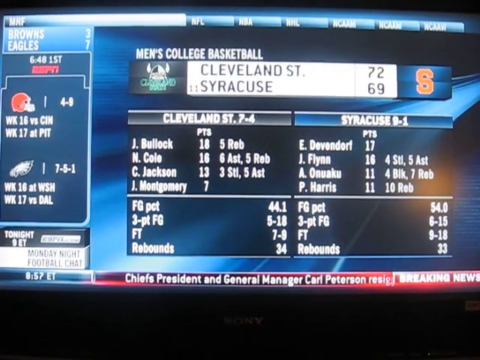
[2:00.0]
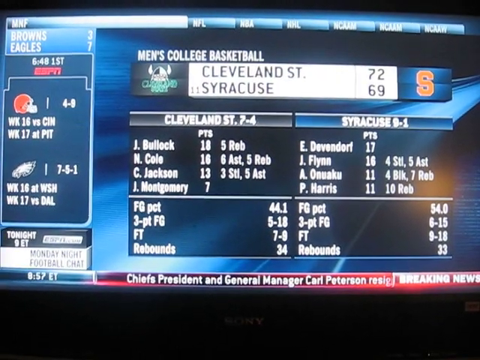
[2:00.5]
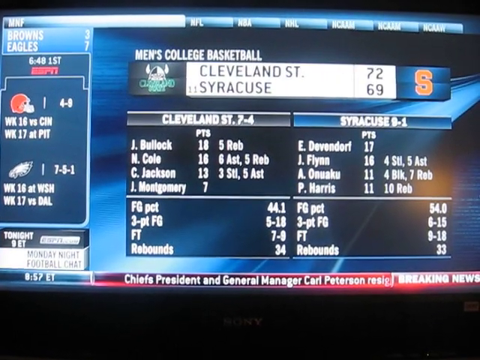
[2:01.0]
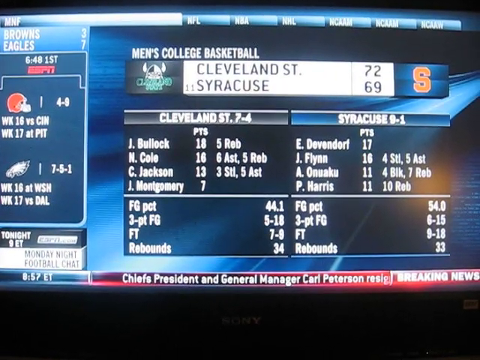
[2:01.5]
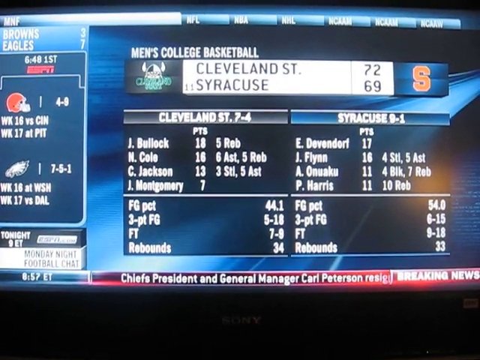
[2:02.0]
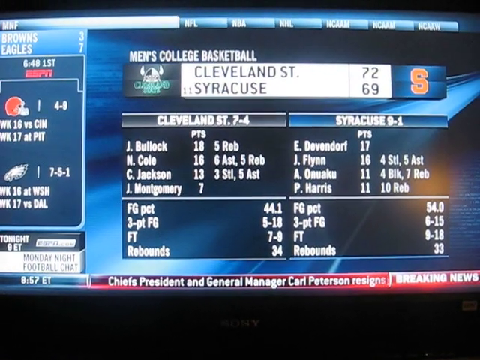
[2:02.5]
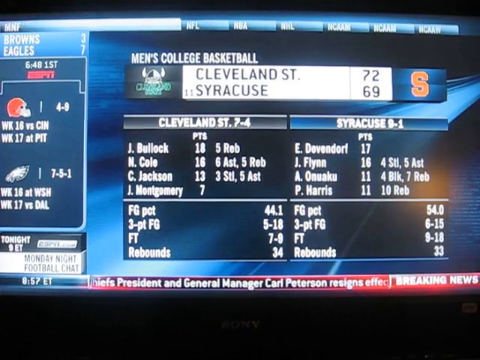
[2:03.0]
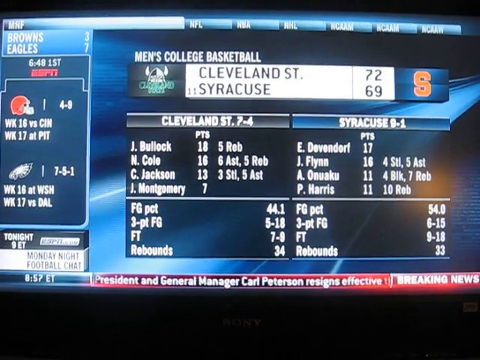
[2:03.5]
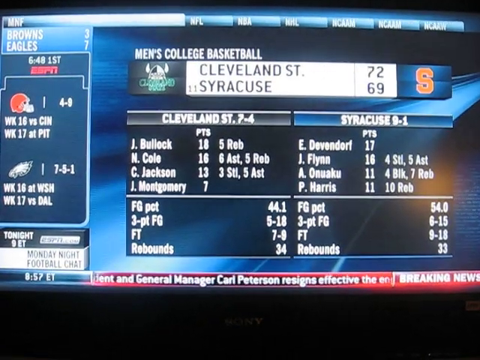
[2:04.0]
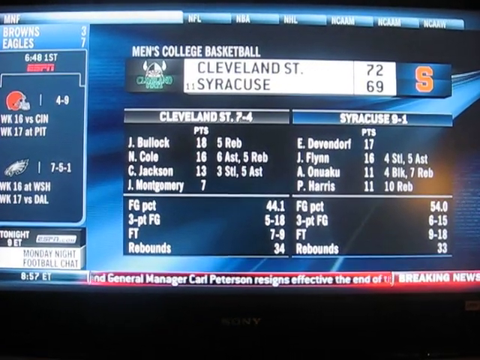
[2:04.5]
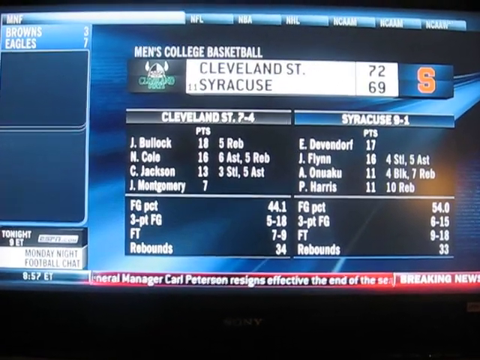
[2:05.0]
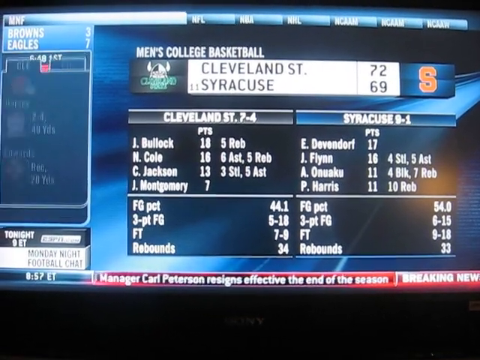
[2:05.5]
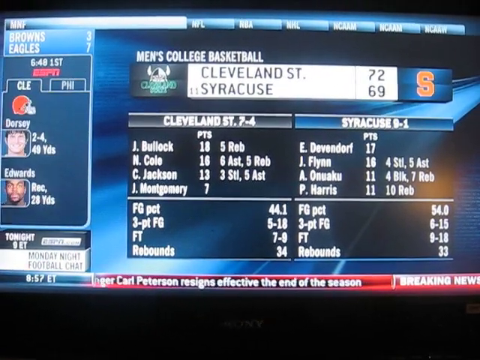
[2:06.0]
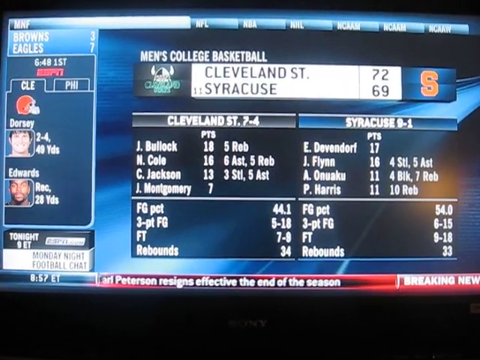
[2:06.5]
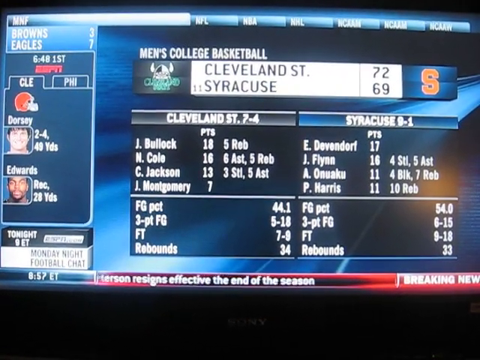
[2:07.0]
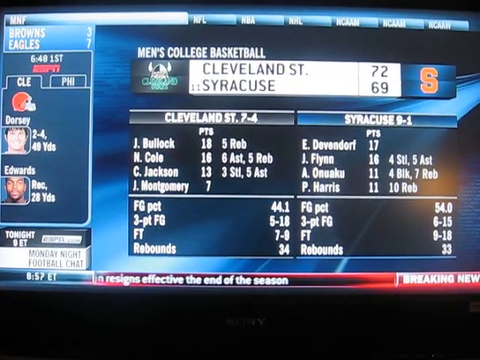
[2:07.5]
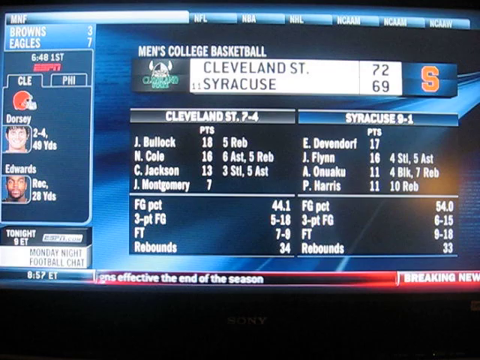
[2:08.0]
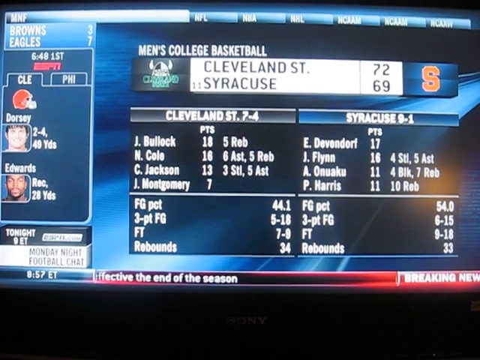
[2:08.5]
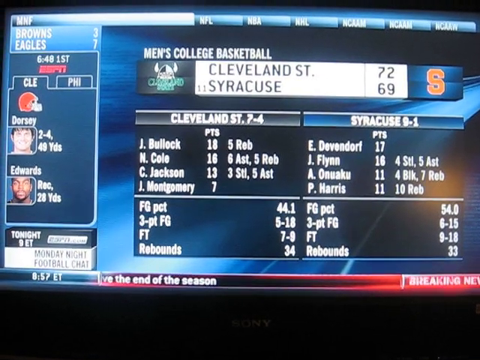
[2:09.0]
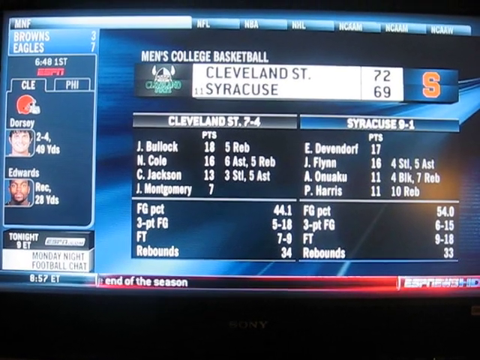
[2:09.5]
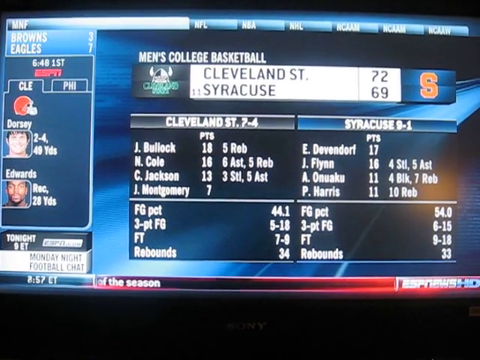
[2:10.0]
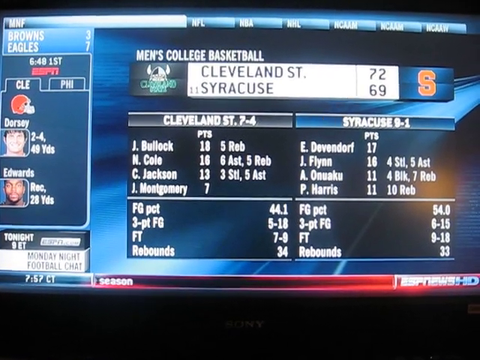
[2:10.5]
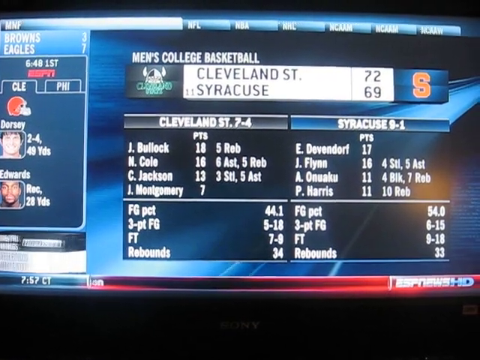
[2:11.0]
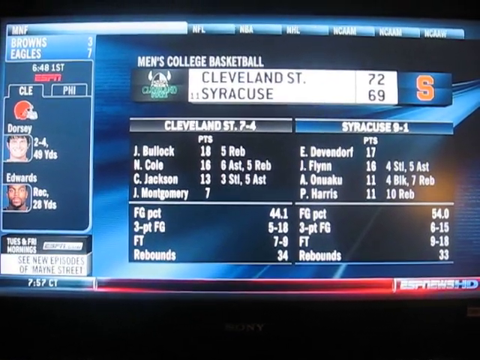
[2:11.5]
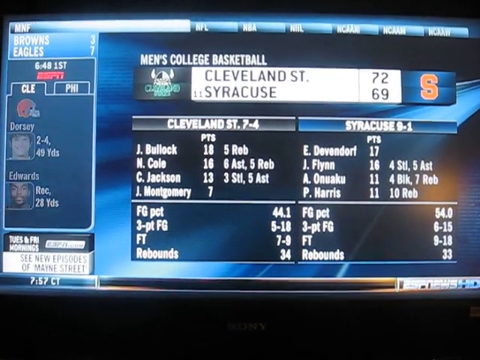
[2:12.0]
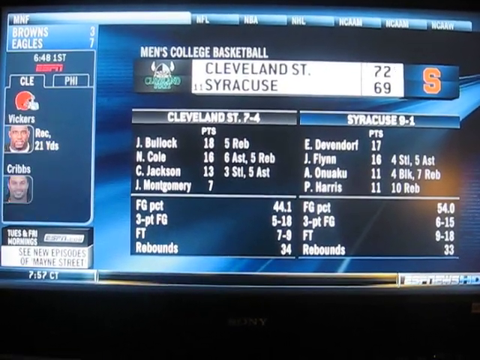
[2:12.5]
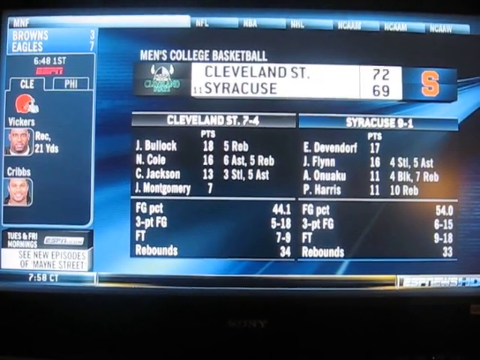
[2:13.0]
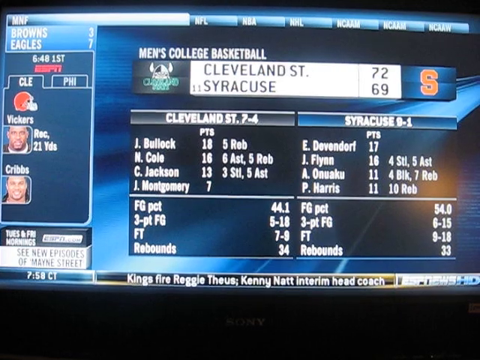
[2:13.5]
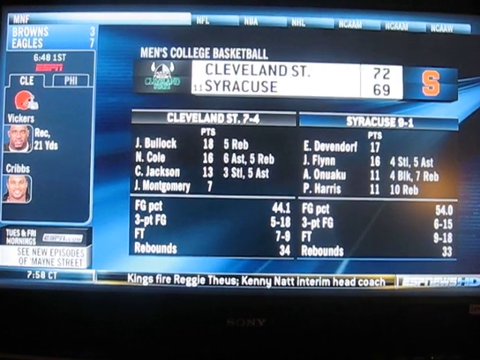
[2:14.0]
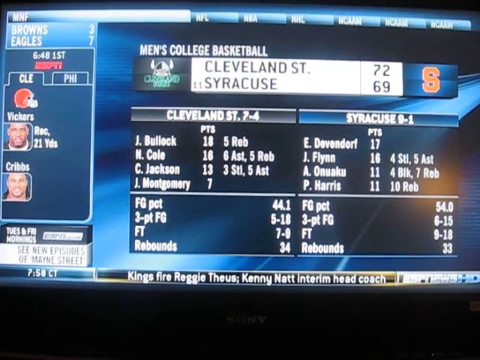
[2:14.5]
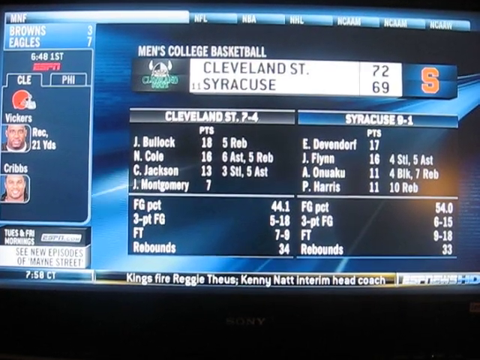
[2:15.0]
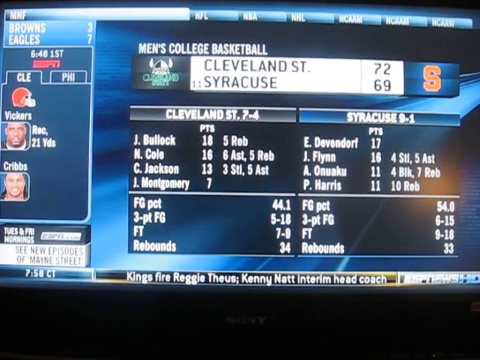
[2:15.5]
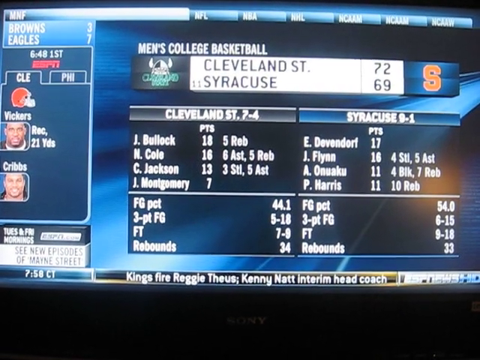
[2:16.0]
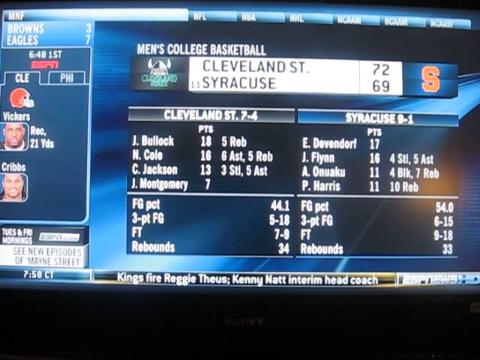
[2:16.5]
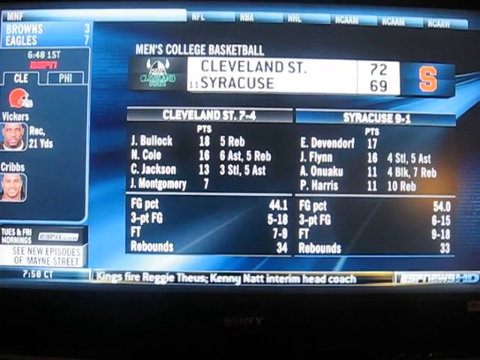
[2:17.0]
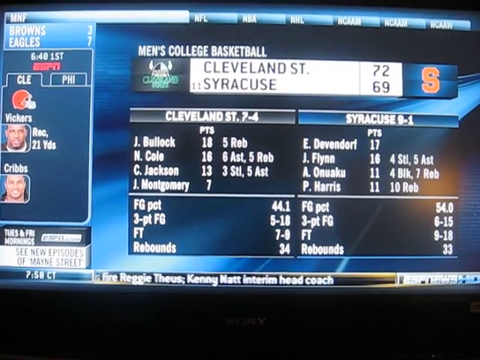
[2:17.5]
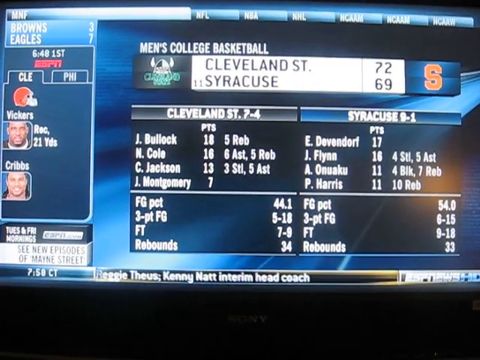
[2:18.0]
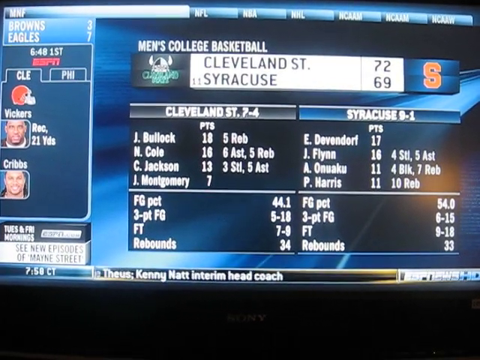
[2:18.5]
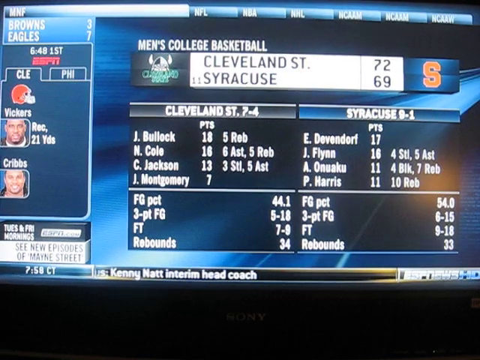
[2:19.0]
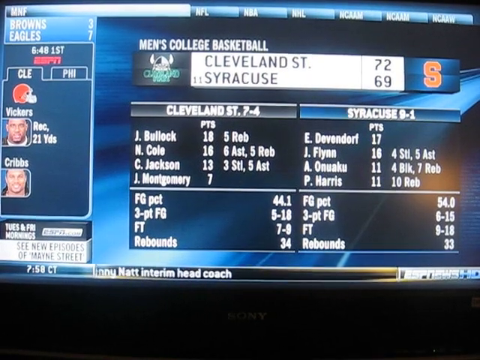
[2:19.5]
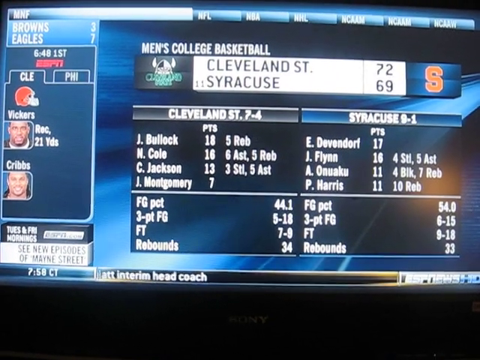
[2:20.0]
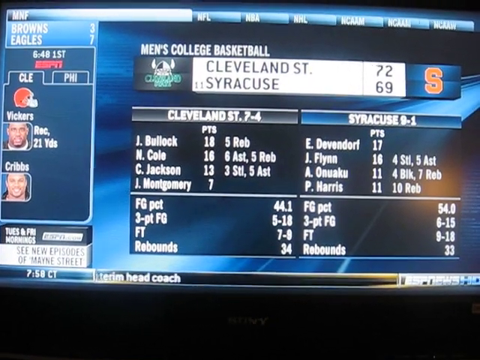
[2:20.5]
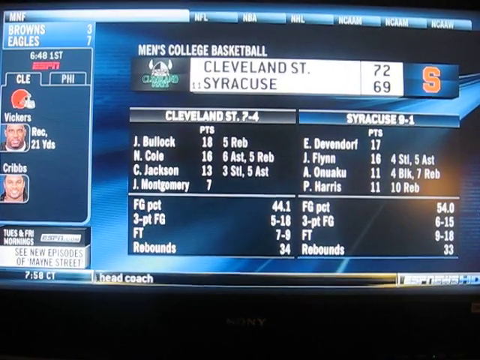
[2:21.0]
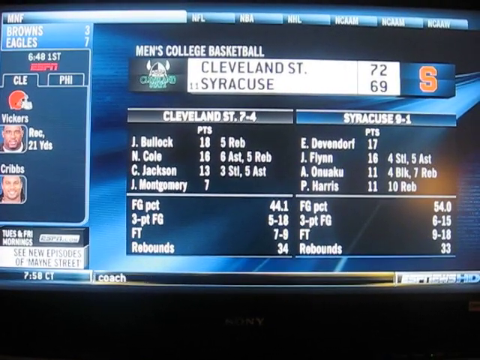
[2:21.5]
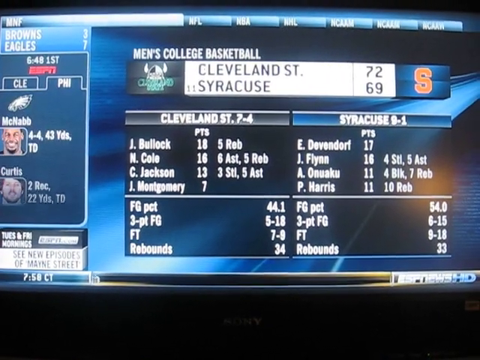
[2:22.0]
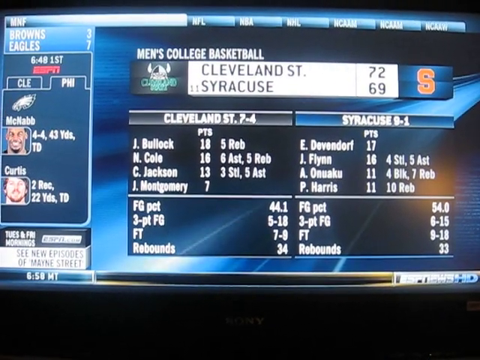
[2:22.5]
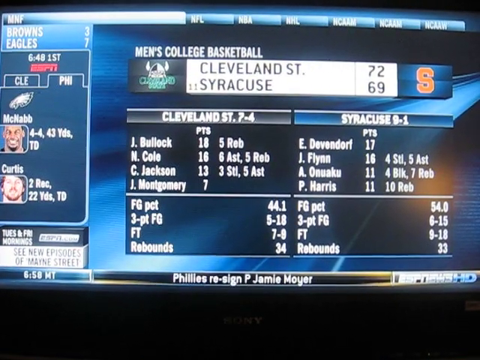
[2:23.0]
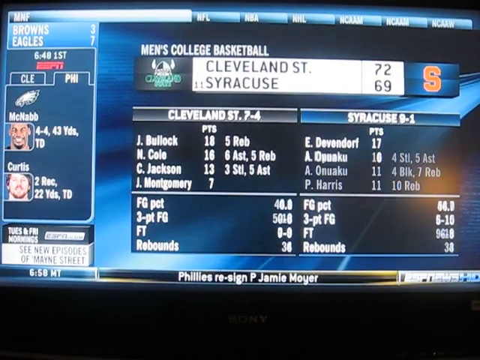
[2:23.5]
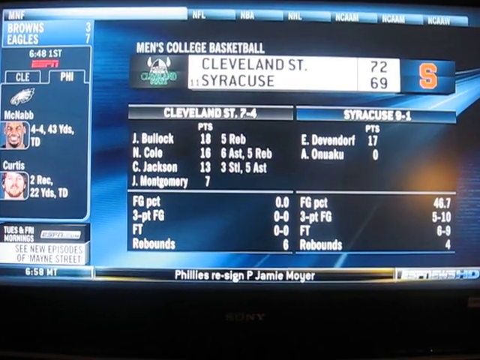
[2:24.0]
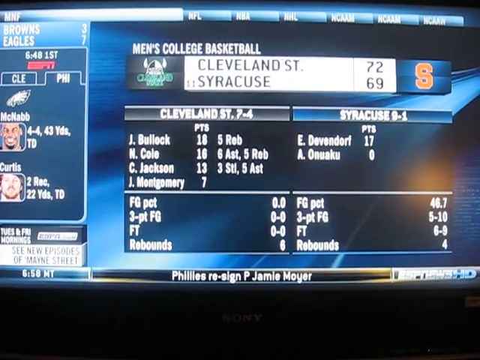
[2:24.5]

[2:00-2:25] The score of the men's college basketball game reads Cleveland ST 72, Syracuse 69. The breakdown lists Cleveland ST with a 7-4 record and Syracuse with a 9-1 record, along with the players and their points. For Cleveland, the players J. Bullock, N. Colo, C. Jackson and J. Montgomery are listed, with FG pct 44.1, 3-pt FG 5-18, FT 7-9 and 34 rebounds. For Syracuse, E. Duesdorf, J. Flynn, A. Onaku and P. Harris are listed with their FG pct, 3-pt FG, FT and rebounds. The left part of the screen shows upcoming football, with the Browns at 3 and the Eagles at 7, players for that game, and "Monday night football chat tonight 9ET".